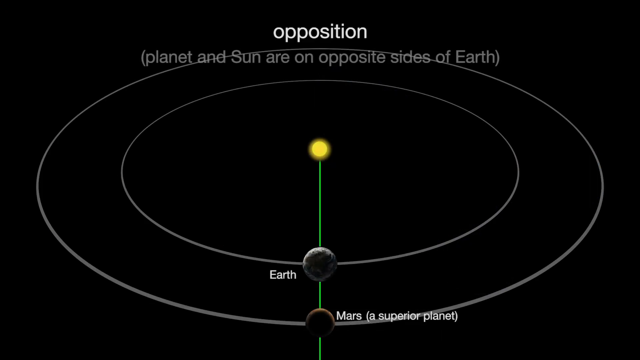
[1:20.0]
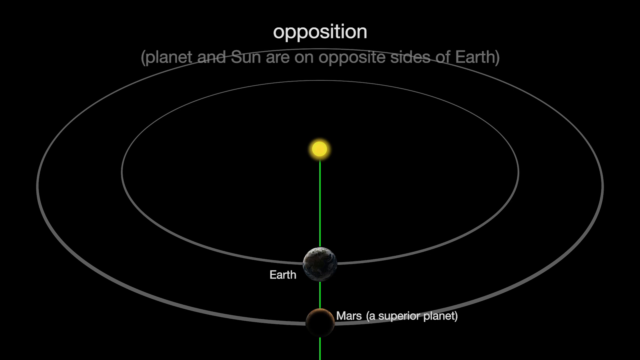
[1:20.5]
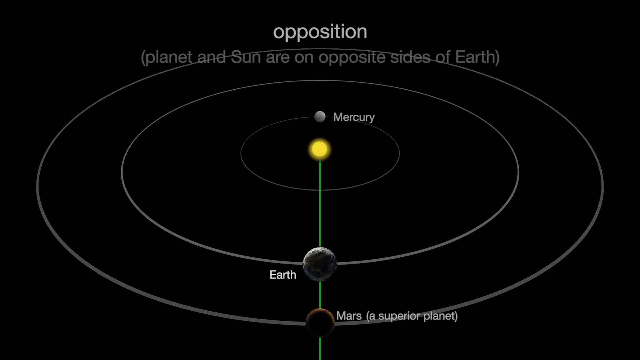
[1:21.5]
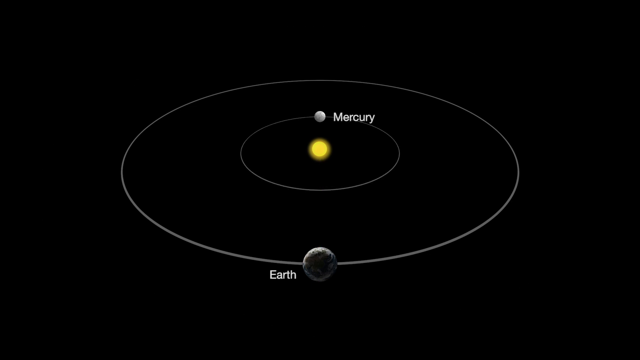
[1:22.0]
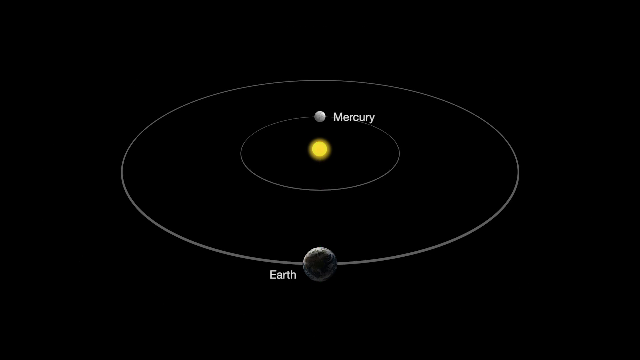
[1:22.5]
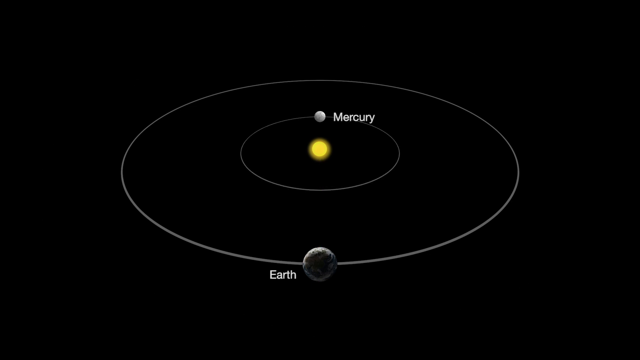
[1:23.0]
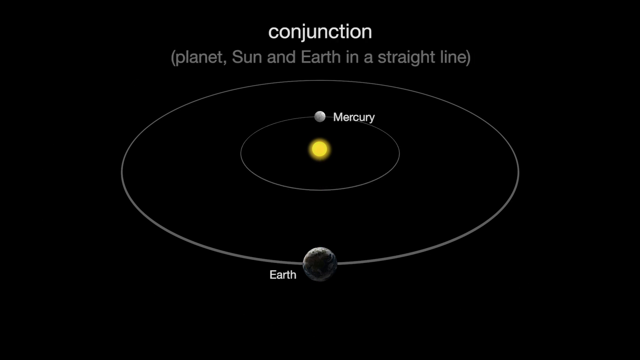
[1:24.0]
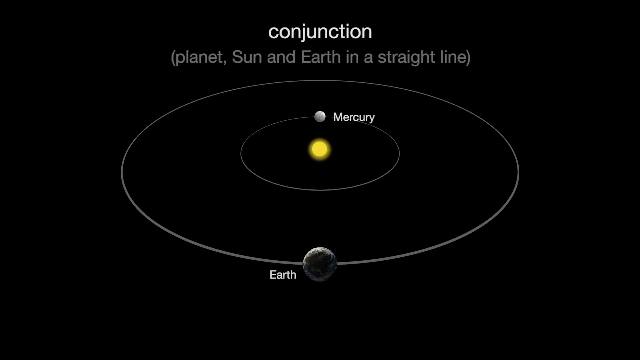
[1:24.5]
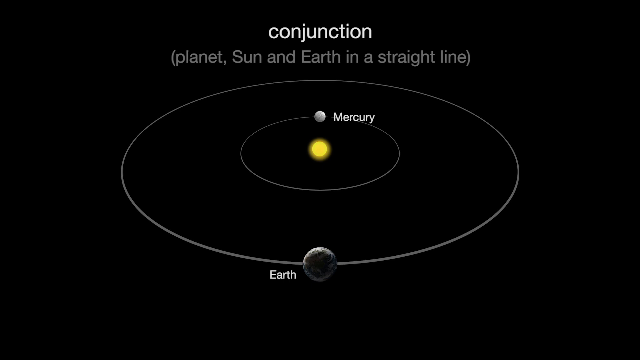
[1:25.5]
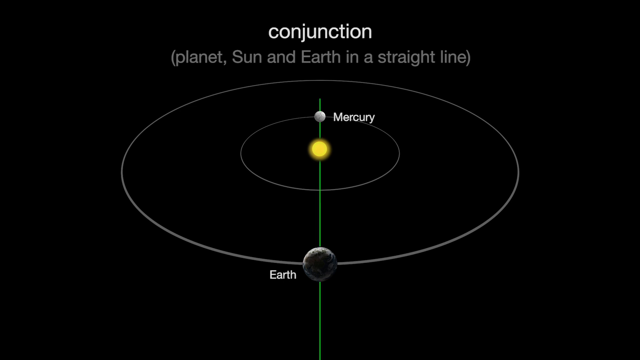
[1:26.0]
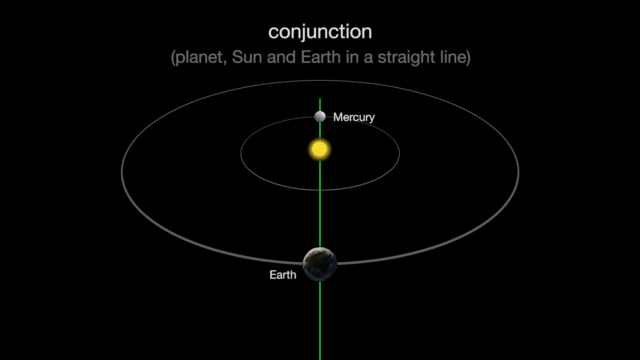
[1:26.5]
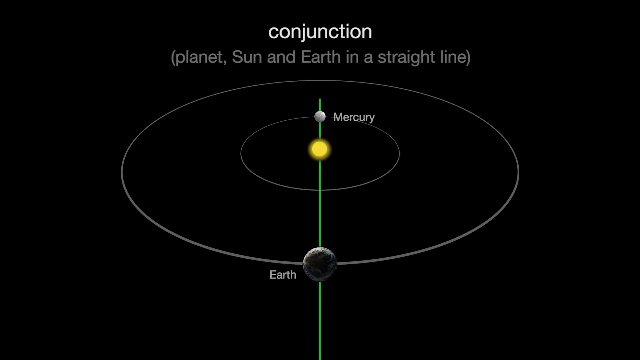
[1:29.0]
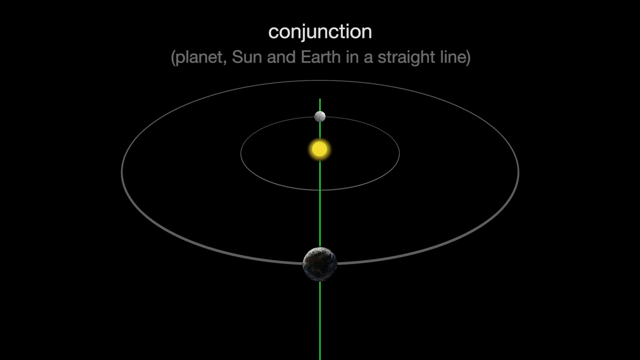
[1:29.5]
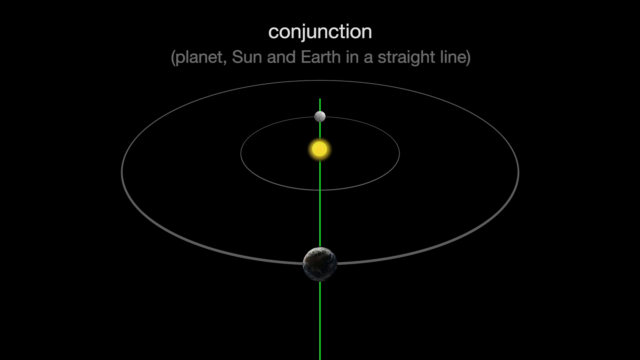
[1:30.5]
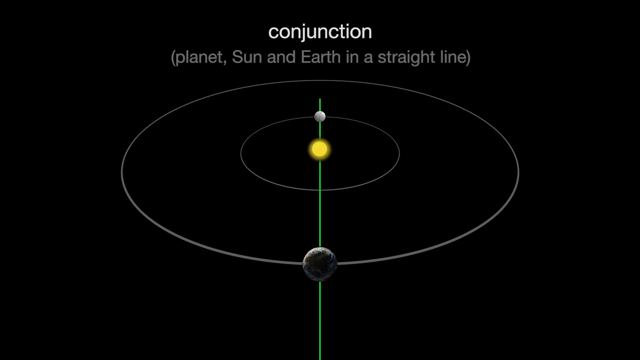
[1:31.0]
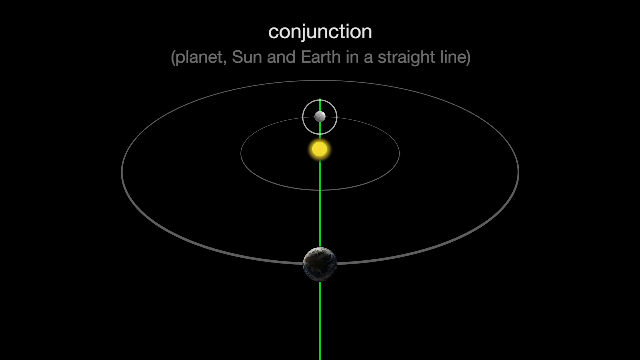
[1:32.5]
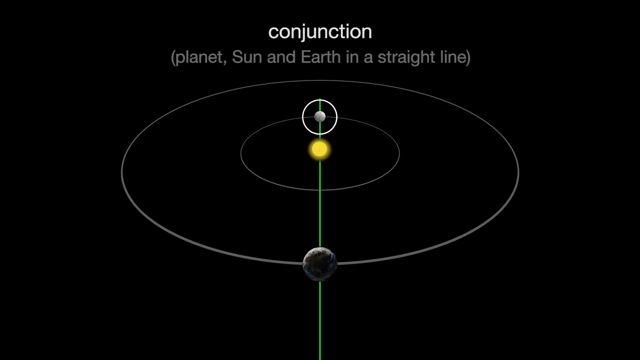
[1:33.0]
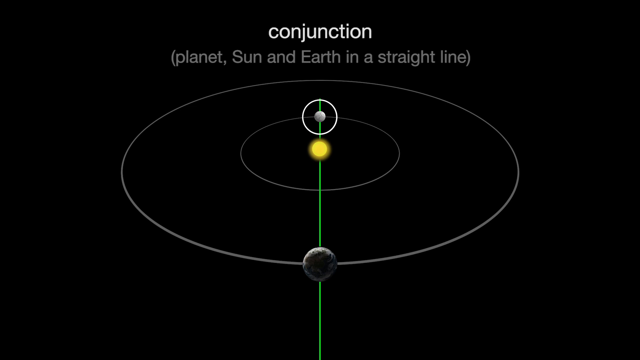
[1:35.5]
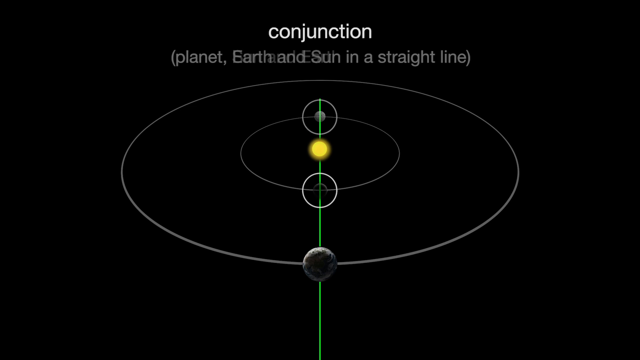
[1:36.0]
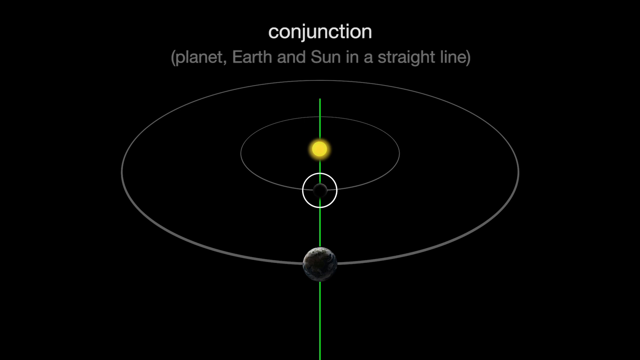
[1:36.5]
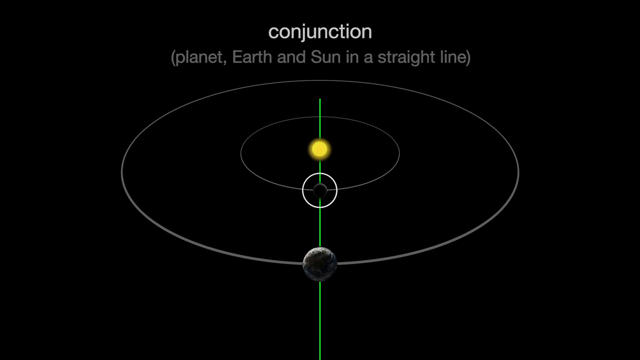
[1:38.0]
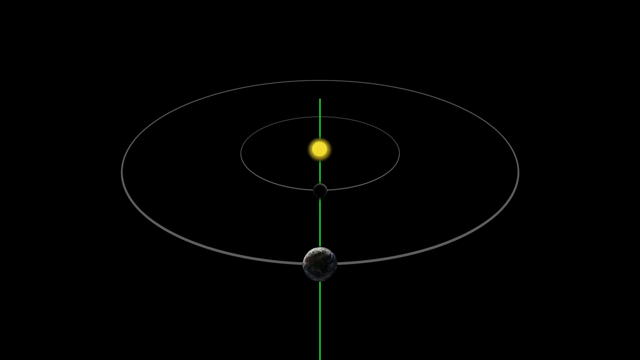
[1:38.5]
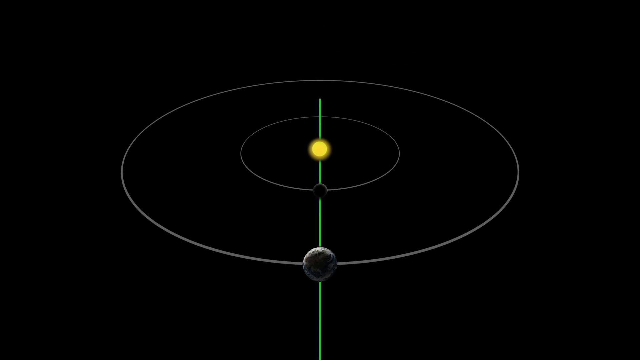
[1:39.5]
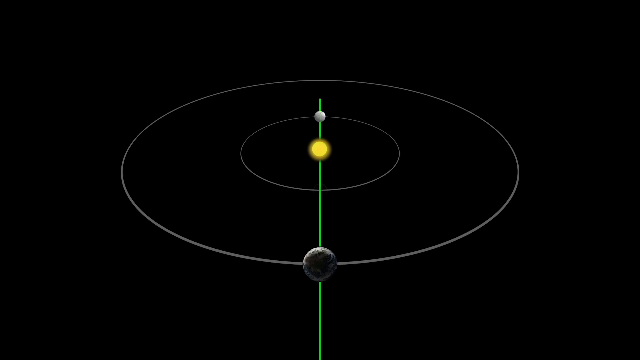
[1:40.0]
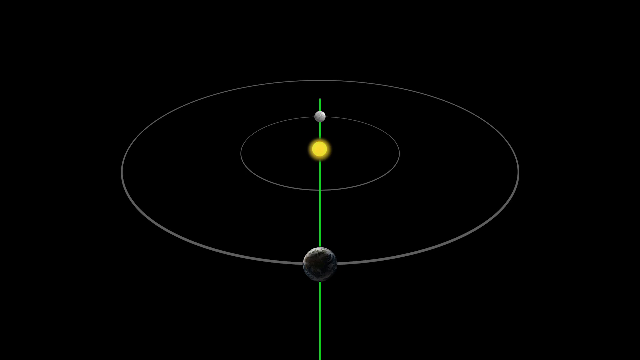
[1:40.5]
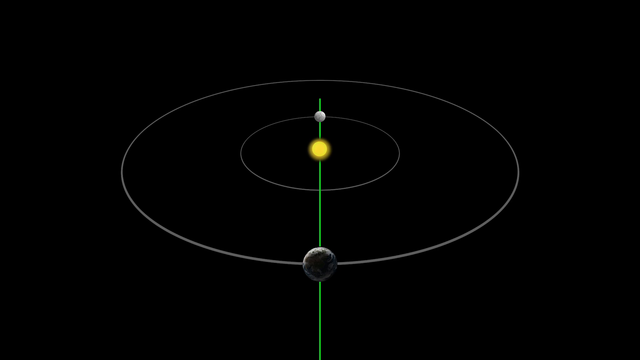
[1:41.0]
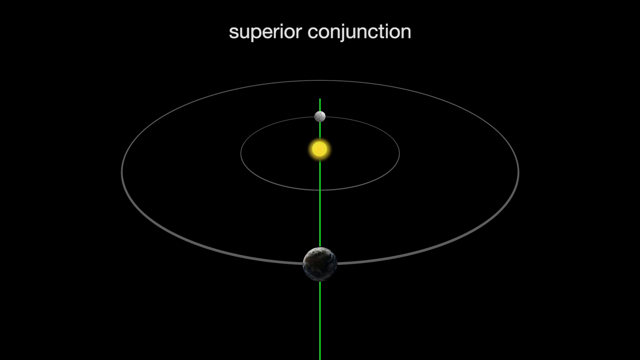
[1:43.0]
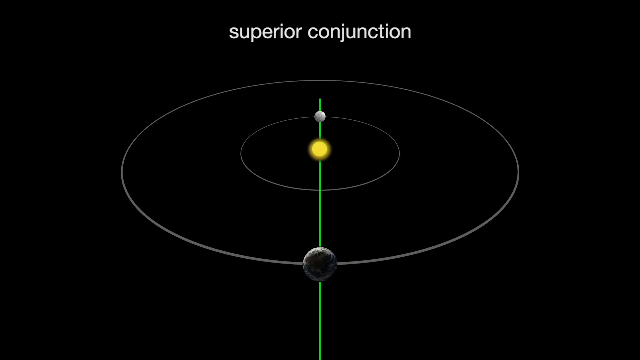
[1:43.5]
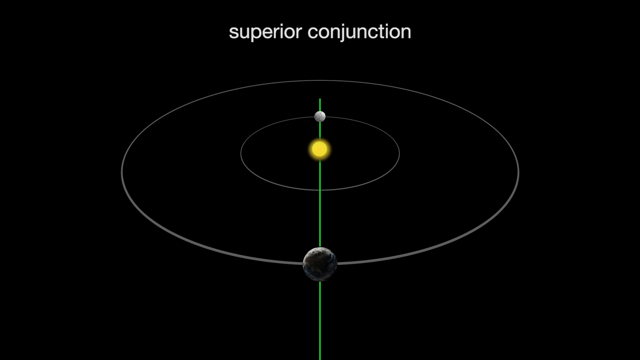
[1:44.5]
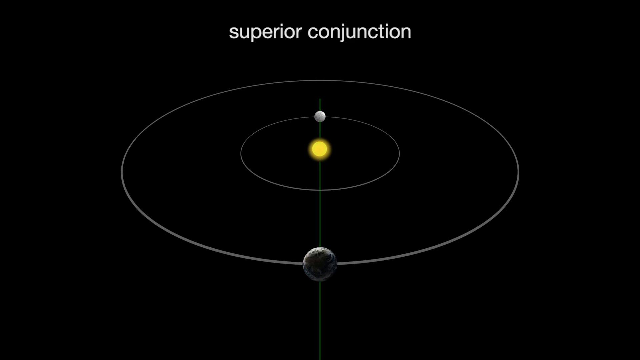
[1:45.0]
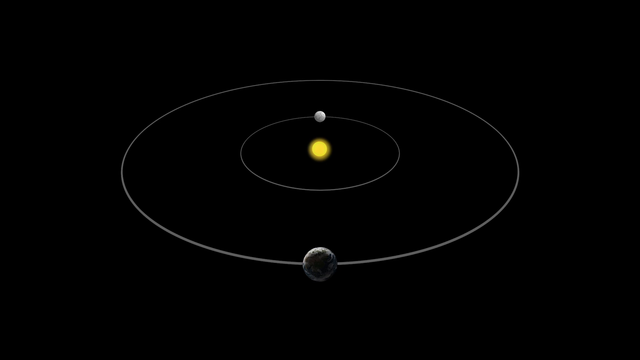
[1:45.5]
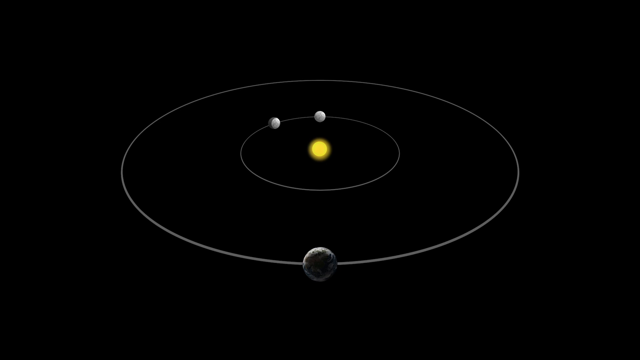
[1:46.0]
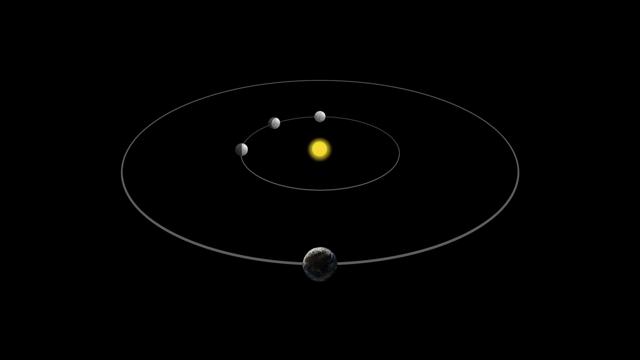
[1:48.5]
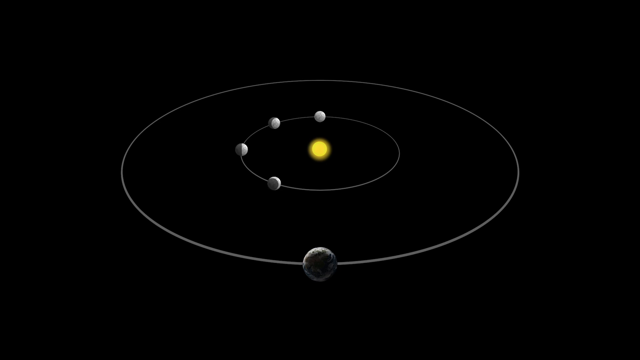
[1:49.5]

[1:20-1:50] Mercury, the Sun and the Earth are shown in orbit, along with an ellipse. A vertical green line runs straight through Mercury, the Sun and the Earth. The scene is set on a completely black background, and its left and right sides are symmetrical. The planets slowly move around the Sun.